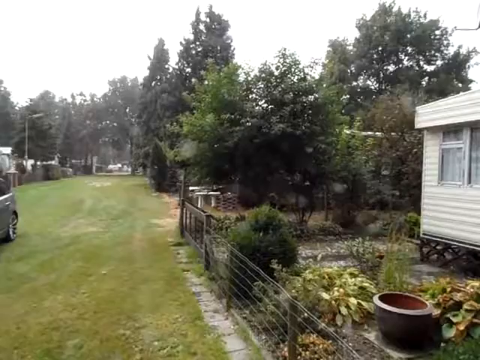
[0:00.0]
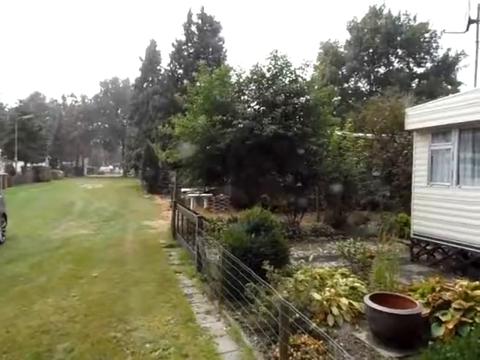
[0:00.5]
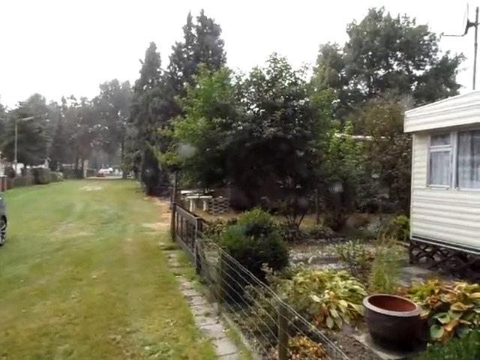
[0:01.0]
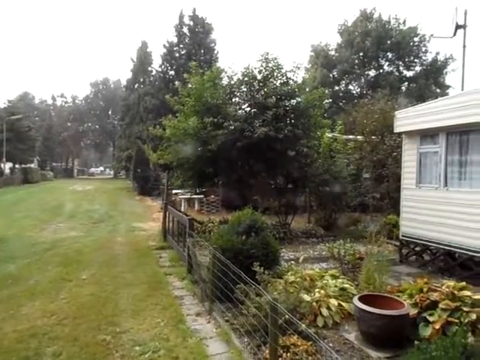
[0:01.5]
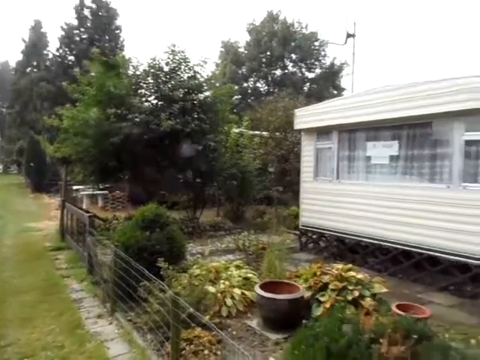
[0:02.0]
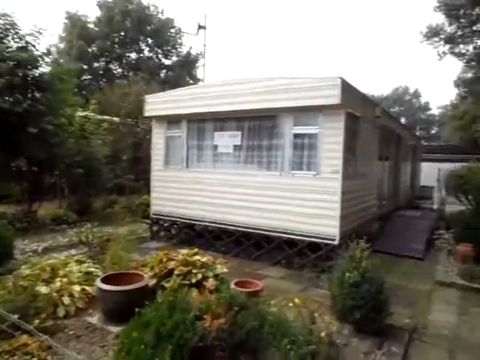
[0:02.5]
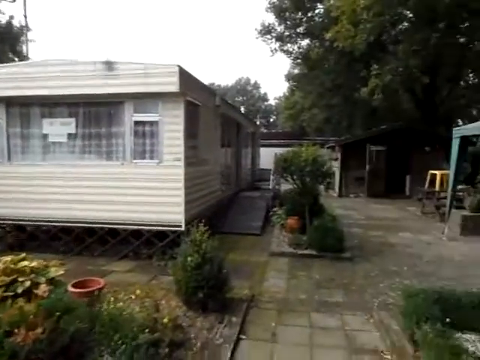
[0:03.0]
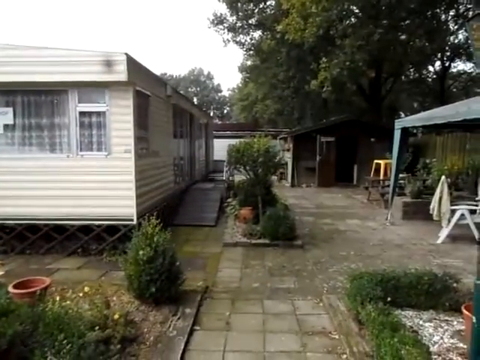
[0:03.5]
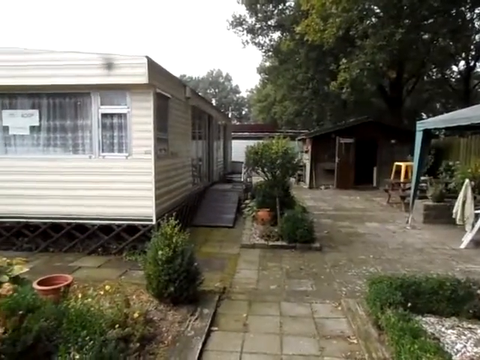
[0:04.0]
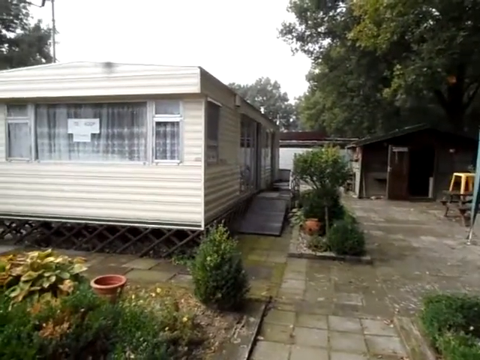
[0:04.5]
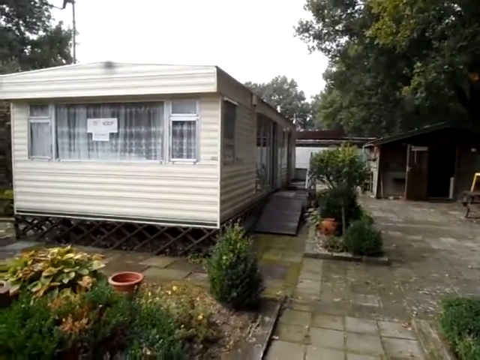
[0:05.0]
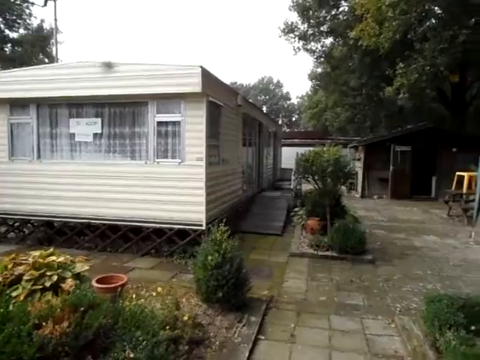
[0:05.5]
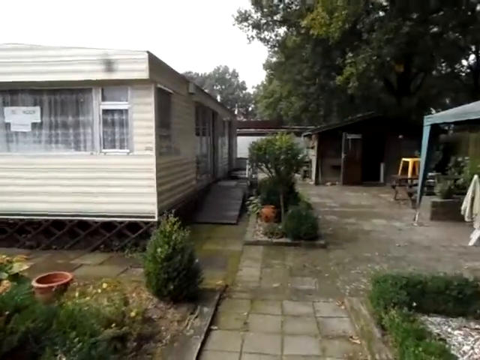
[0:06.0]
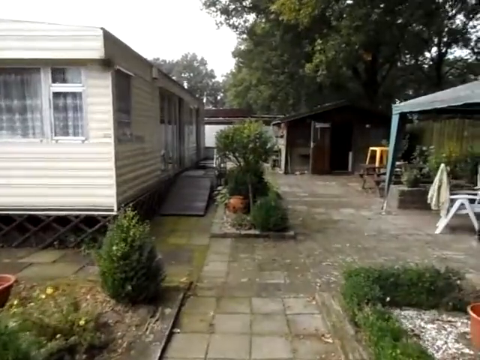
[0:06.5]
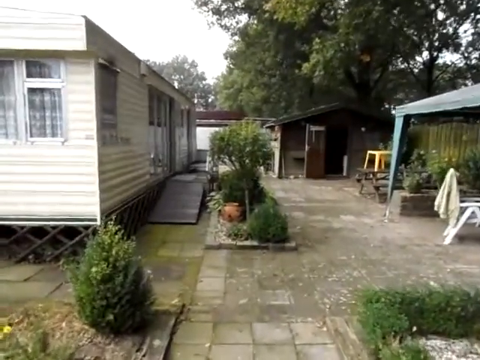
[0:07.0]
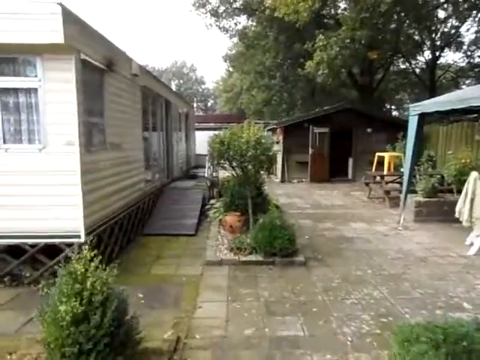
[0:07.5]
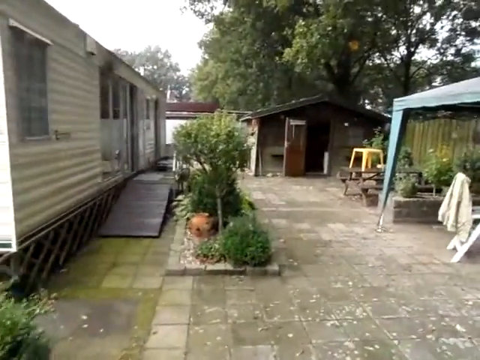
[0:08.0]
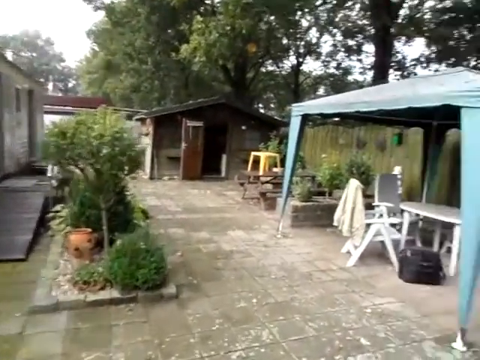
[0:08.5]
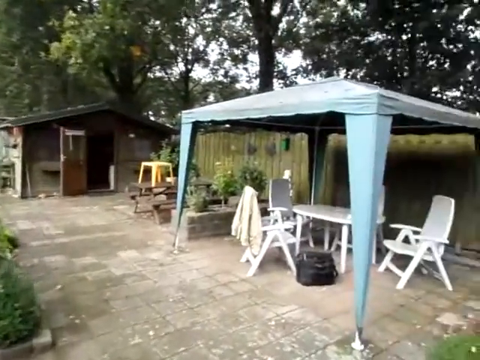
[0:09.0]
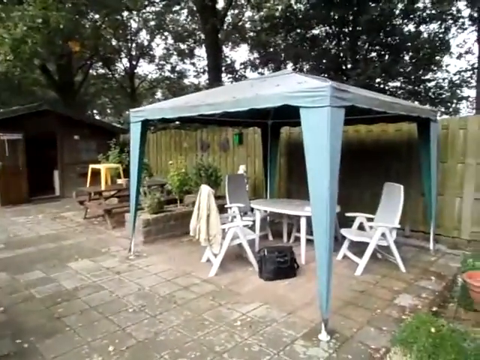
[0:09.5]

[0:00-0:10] A trailer park is shown with gardening and many different types of trees and shrubbery surrounding it in the background.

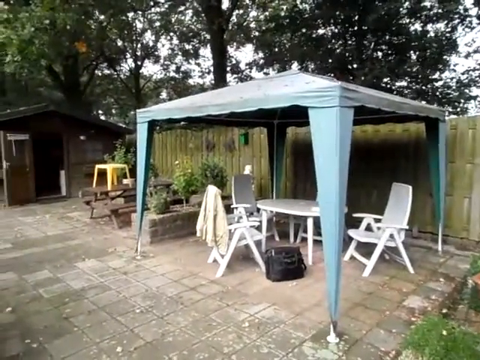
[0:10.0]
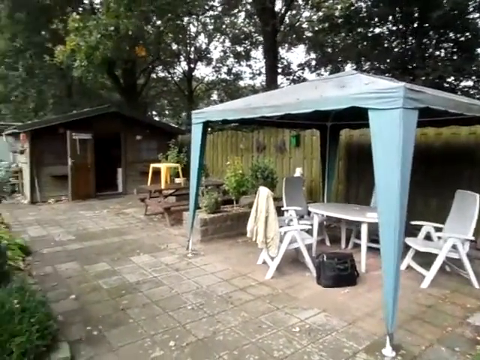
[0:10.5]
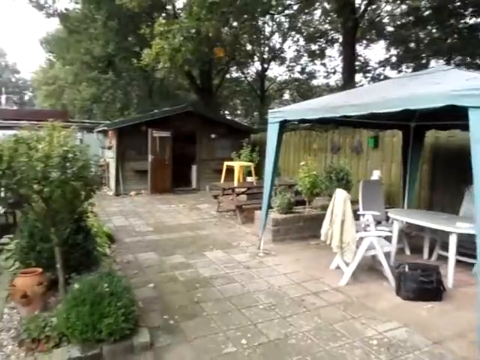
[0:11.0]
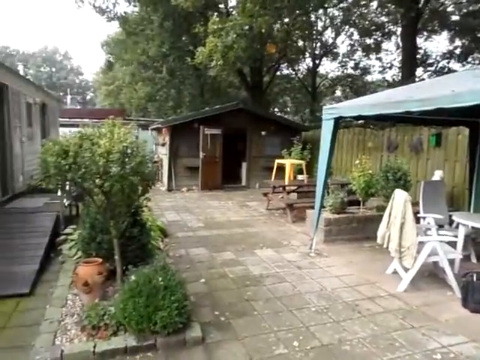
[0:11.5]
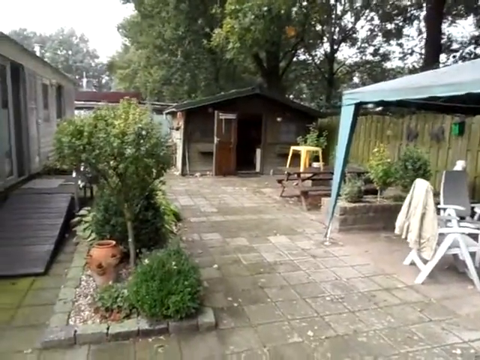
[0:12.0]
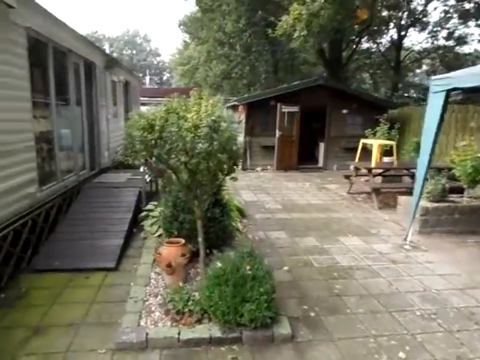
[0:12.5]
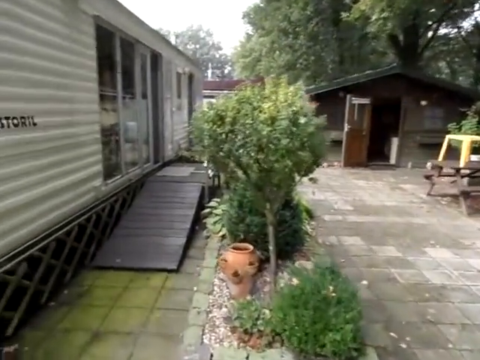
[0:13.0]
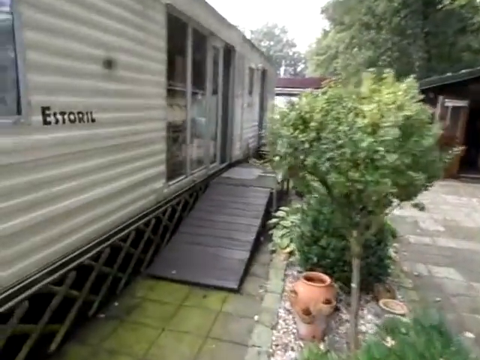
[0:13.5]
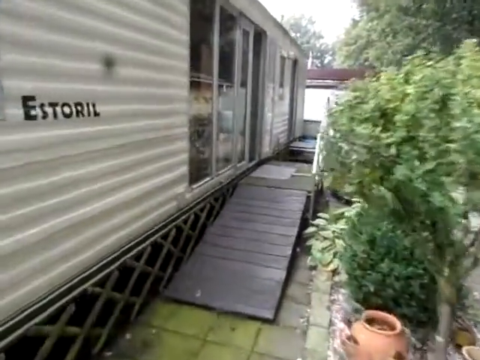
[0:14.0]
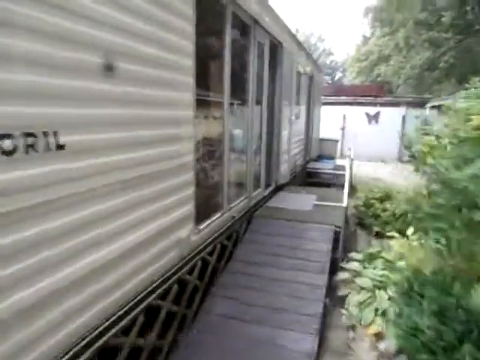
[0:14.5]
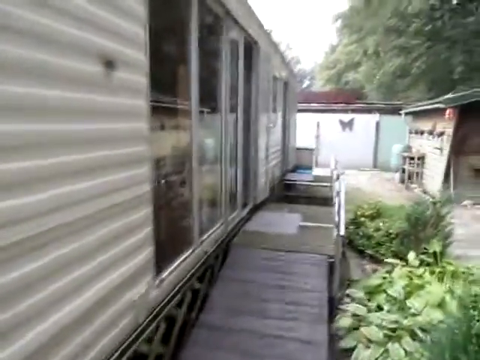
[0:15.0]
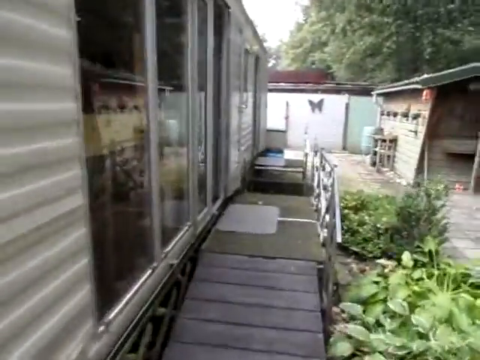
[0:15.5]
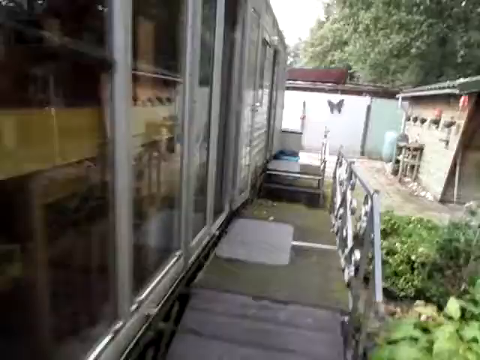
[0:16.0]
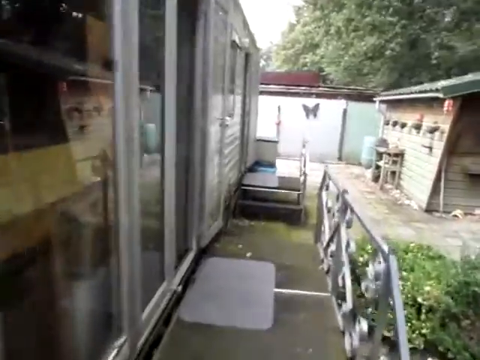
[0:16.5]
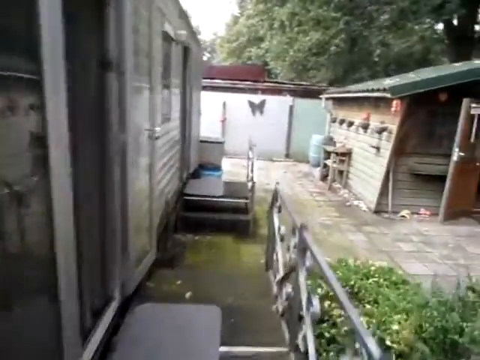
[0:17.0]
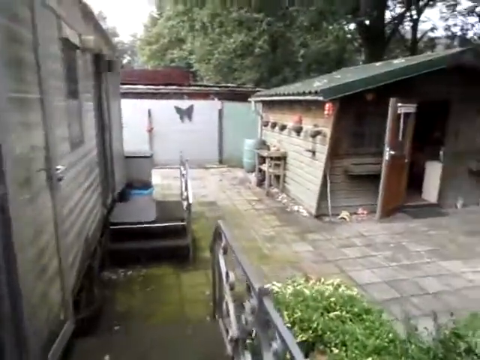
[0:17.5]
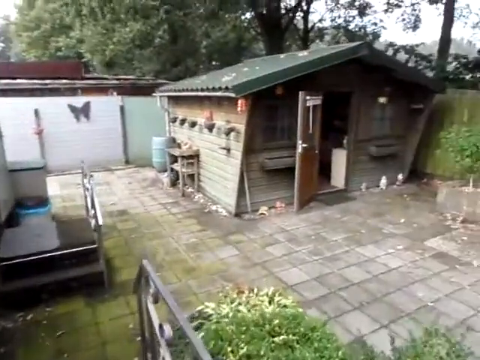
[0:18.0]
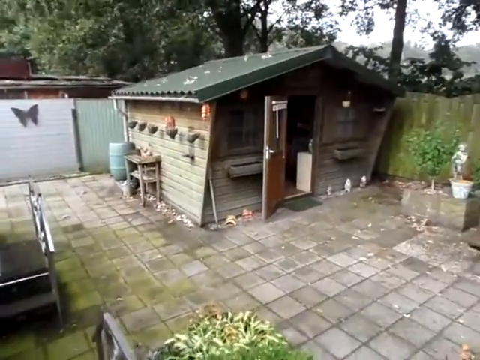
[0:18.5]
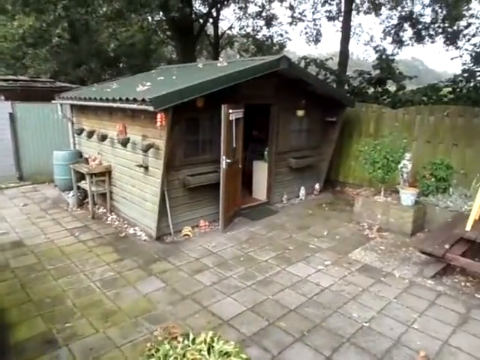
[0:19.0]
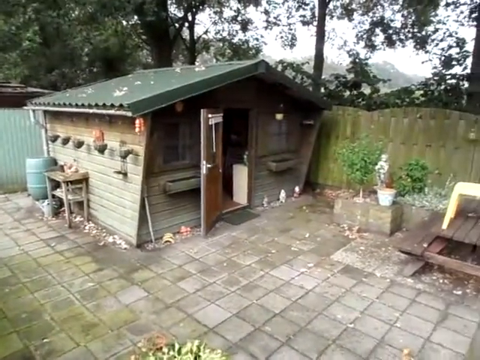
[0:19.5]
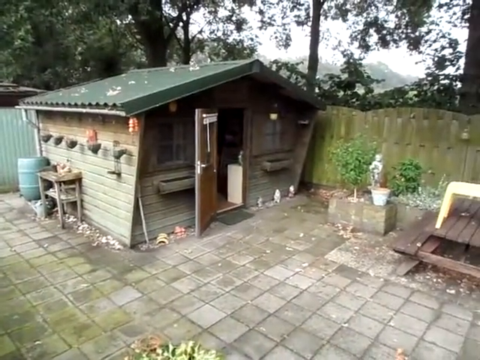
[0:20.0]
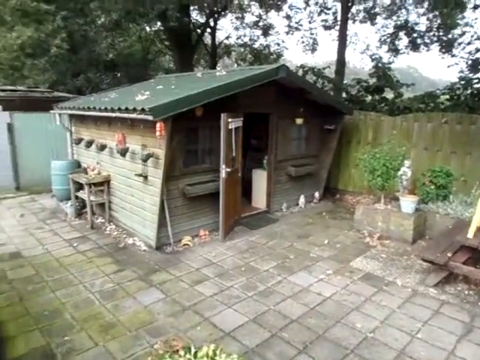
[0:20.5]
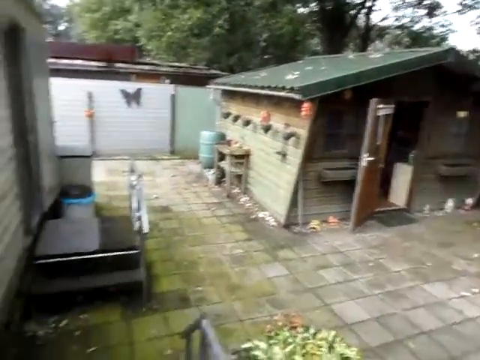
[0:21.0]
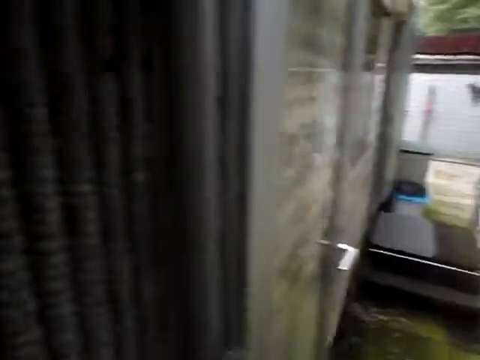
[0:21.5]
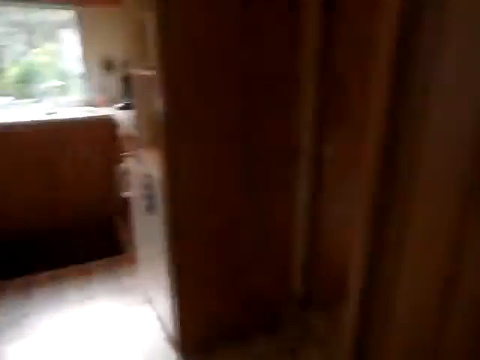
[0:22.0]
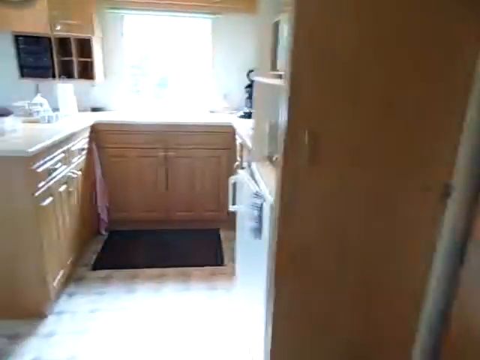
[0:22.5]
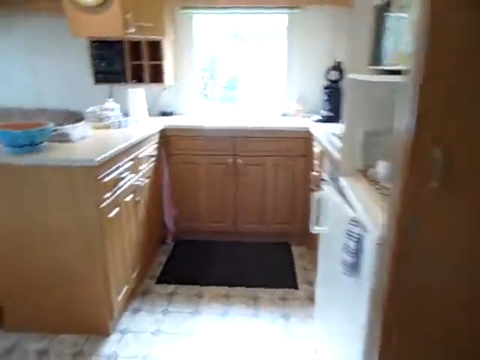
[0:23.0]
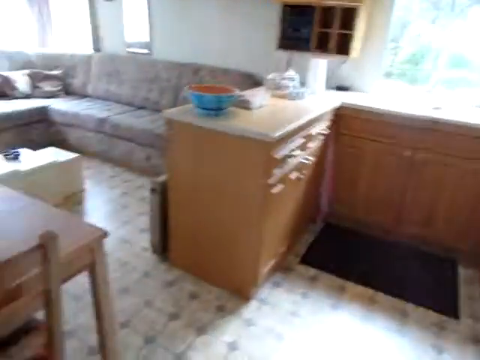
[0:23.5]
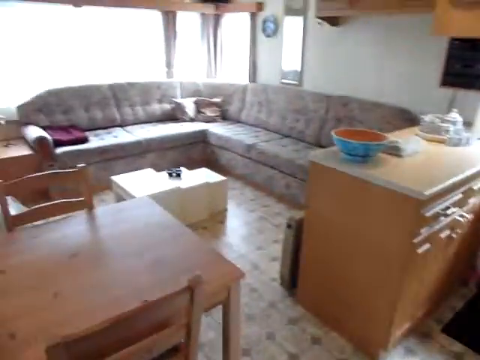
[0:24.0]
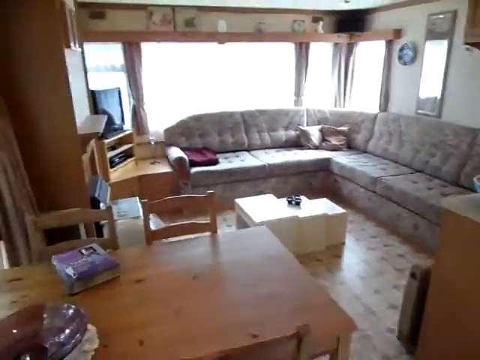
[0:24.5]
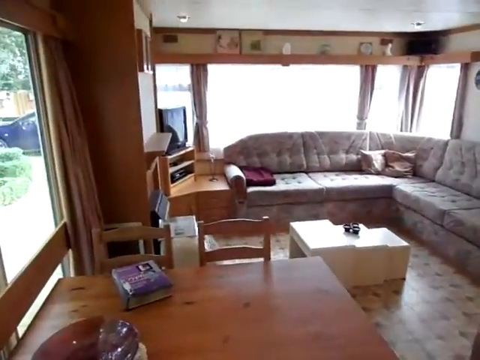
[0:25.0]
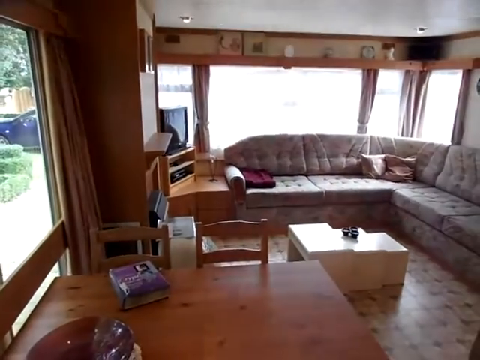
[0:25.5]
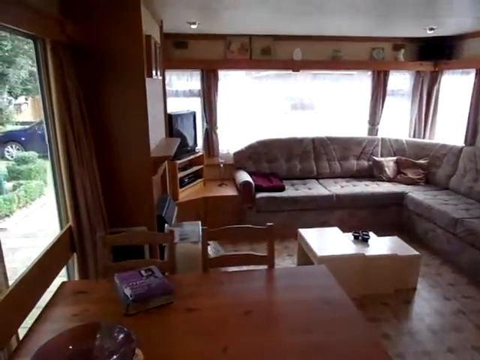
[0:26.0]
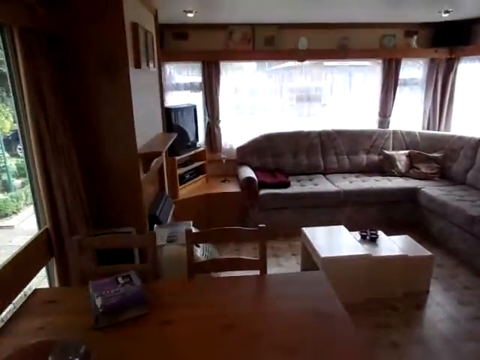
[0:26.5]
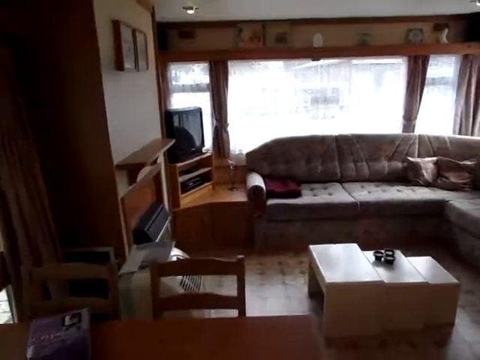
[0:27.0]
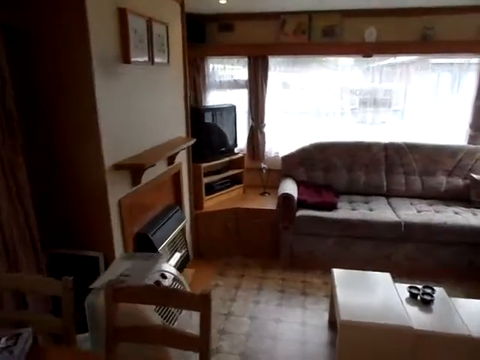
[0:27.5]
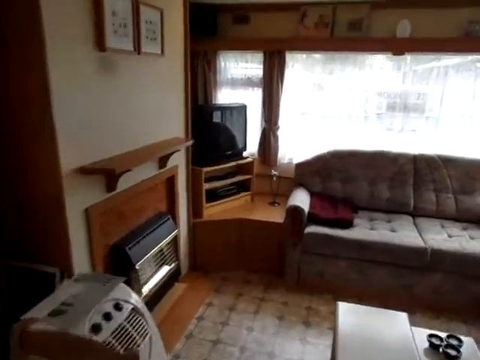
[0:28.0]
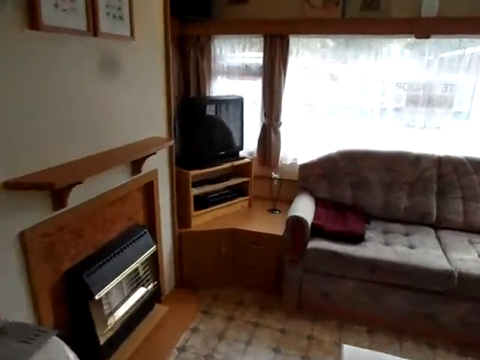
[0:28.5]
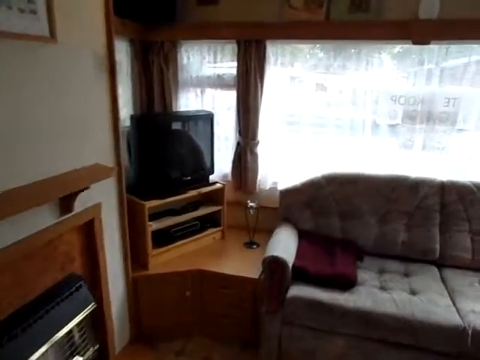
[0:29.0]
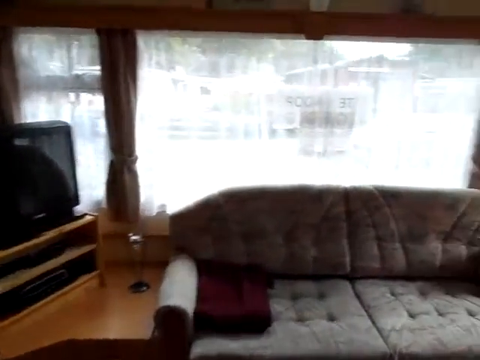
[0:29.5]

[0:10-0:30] There is a lot of outdoor furniture, greenery and shrubbery around what appears to be a trailer park, with many couches and chairs set among the trees in different seating arrangements.